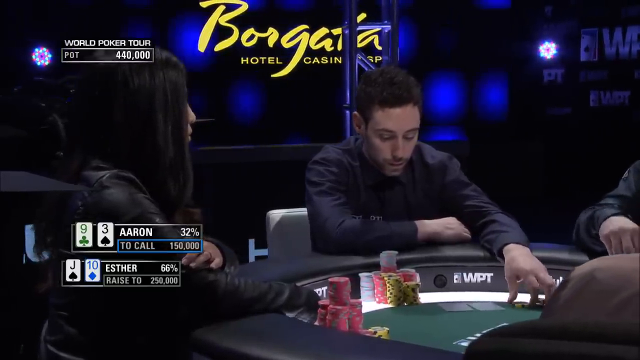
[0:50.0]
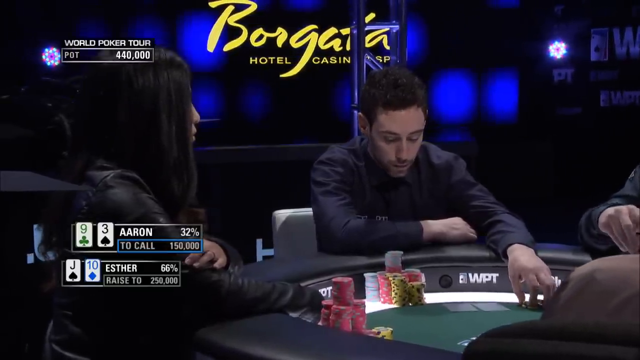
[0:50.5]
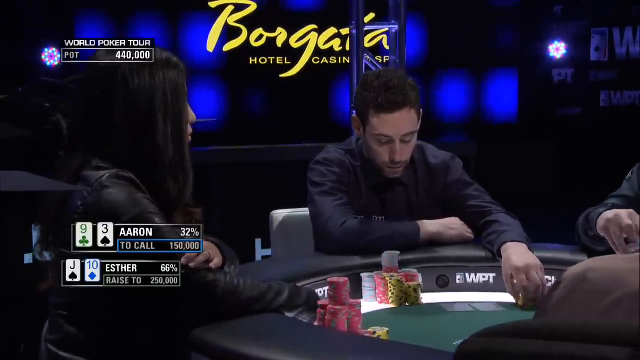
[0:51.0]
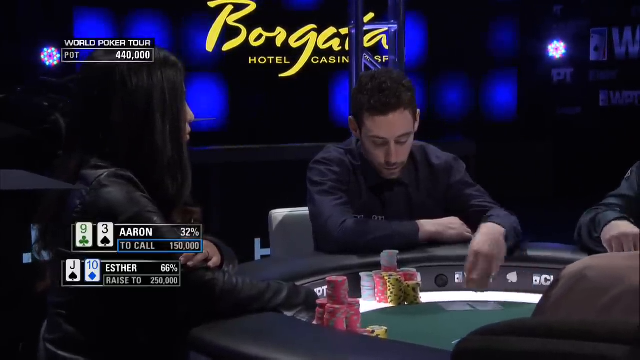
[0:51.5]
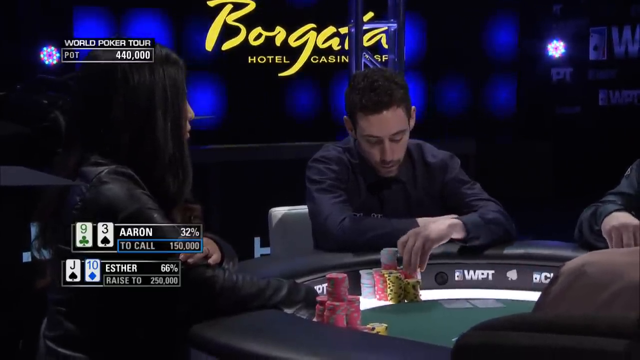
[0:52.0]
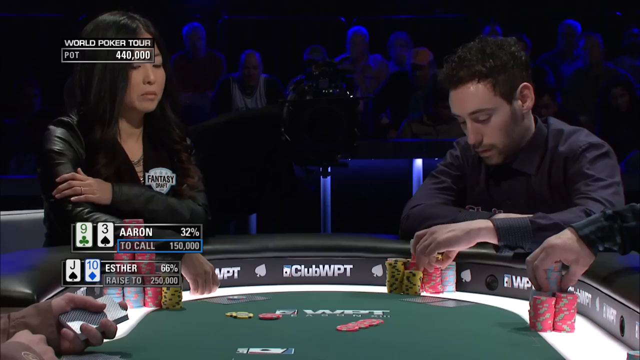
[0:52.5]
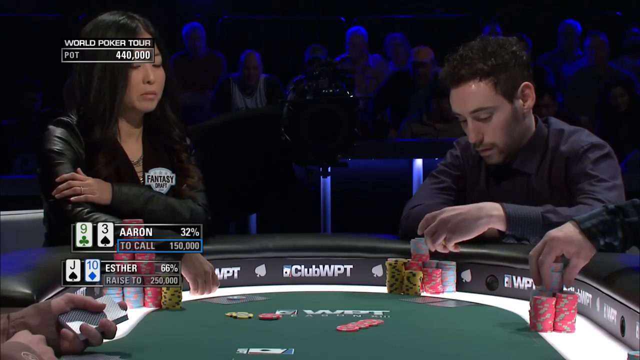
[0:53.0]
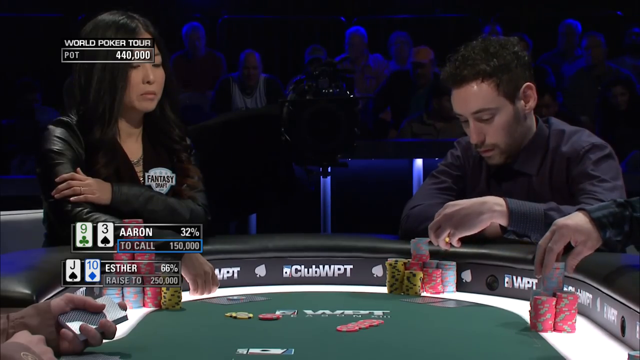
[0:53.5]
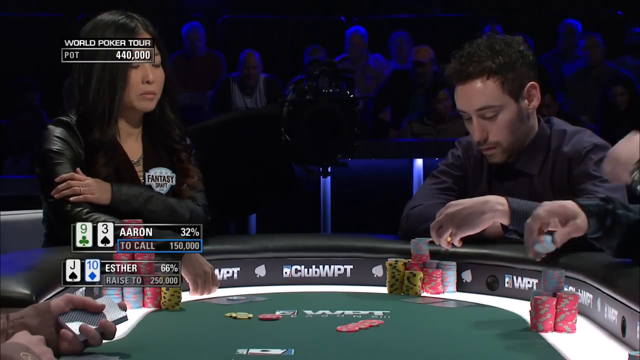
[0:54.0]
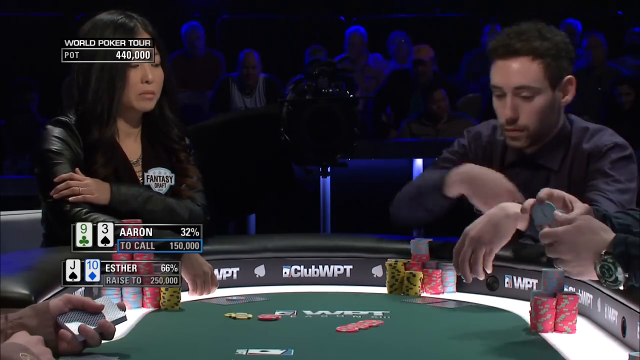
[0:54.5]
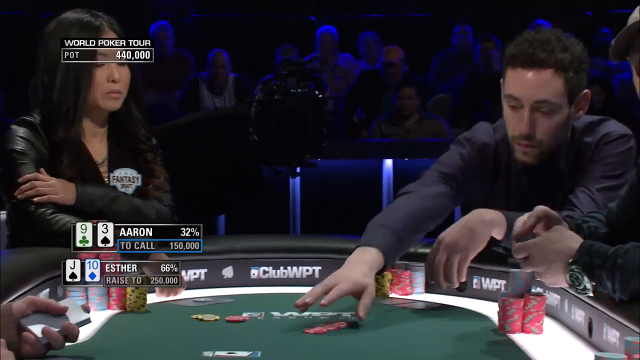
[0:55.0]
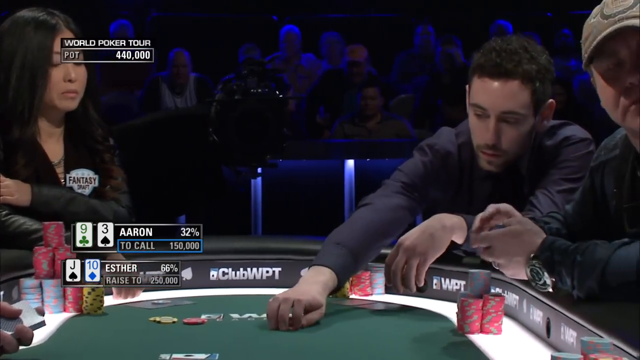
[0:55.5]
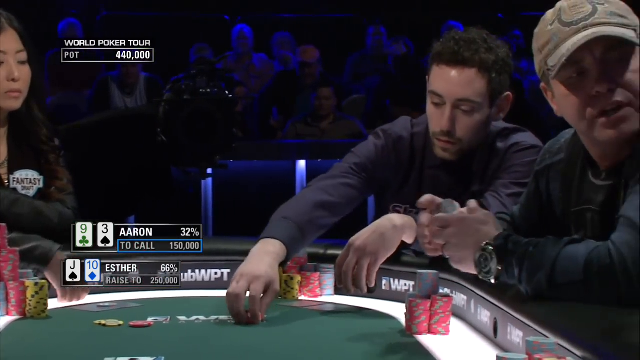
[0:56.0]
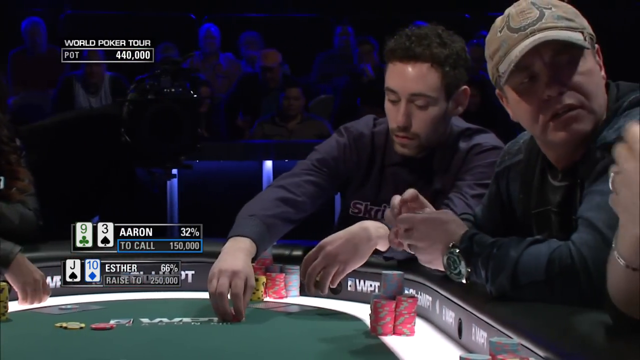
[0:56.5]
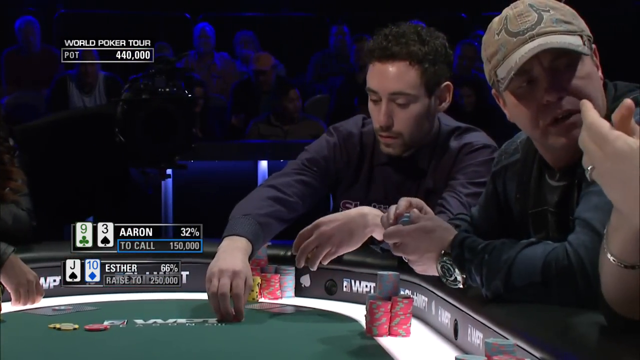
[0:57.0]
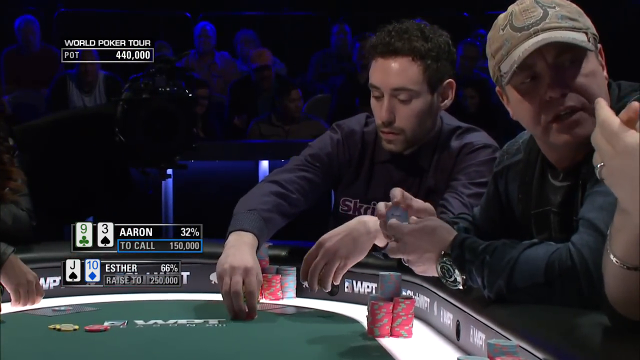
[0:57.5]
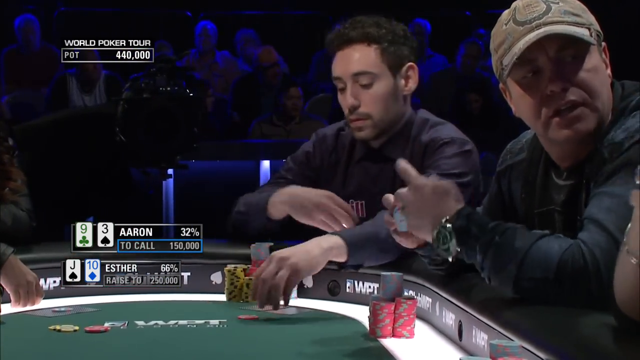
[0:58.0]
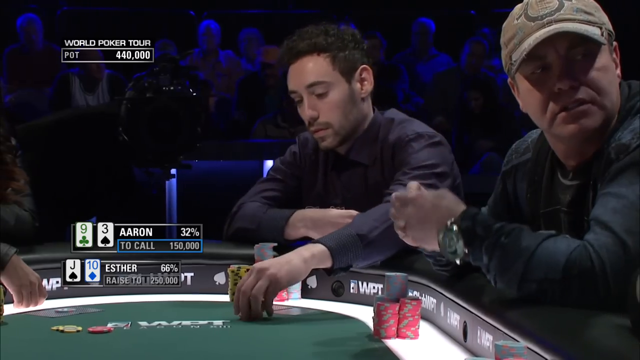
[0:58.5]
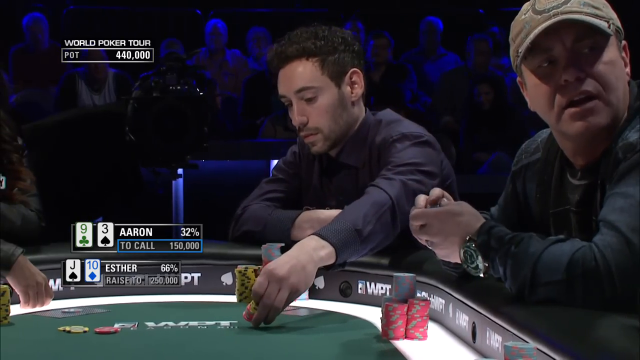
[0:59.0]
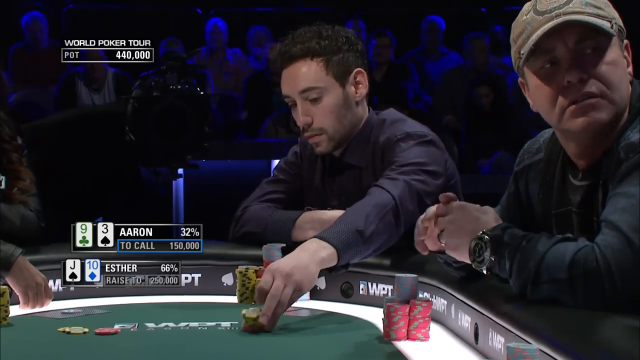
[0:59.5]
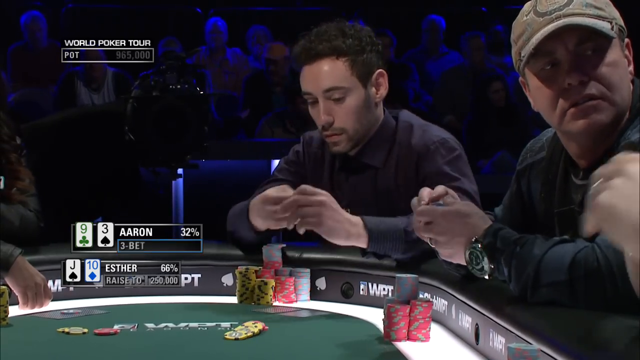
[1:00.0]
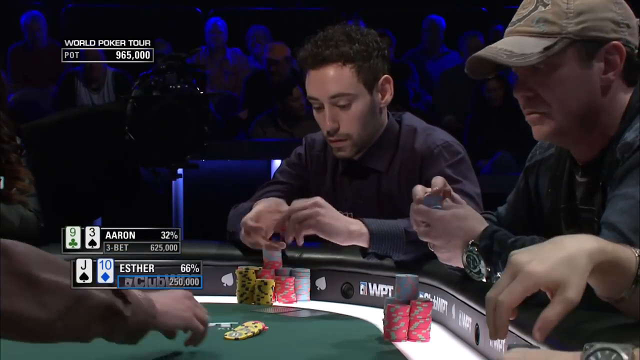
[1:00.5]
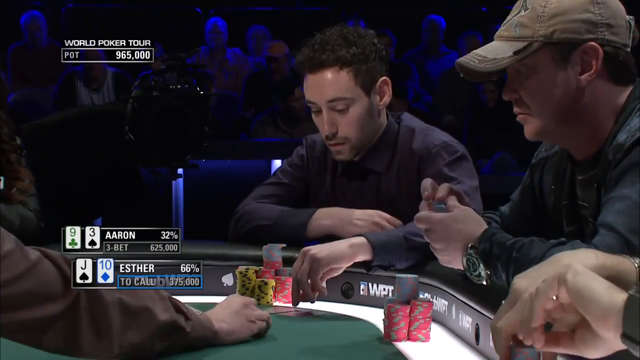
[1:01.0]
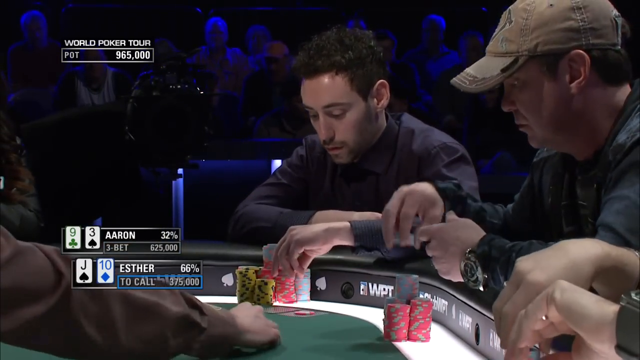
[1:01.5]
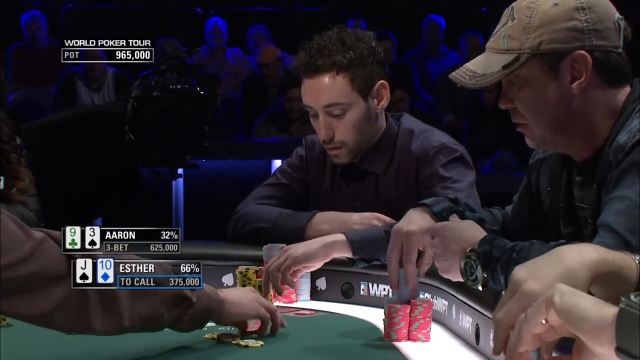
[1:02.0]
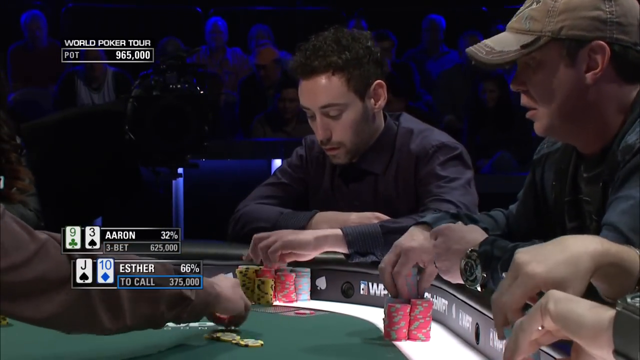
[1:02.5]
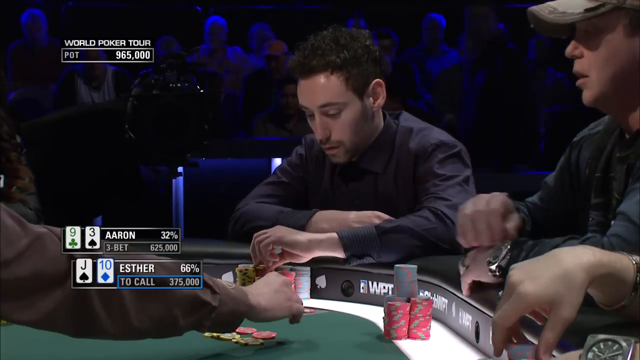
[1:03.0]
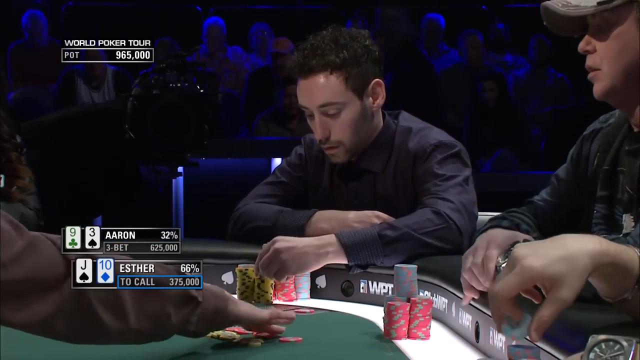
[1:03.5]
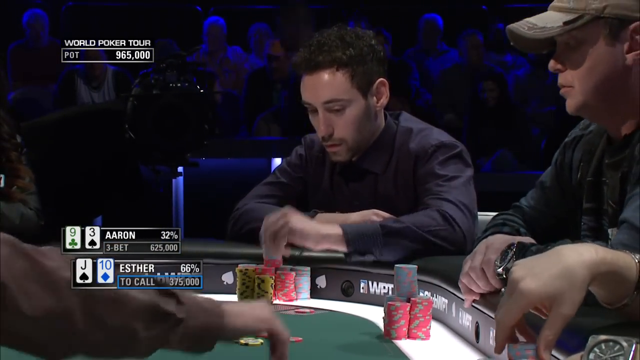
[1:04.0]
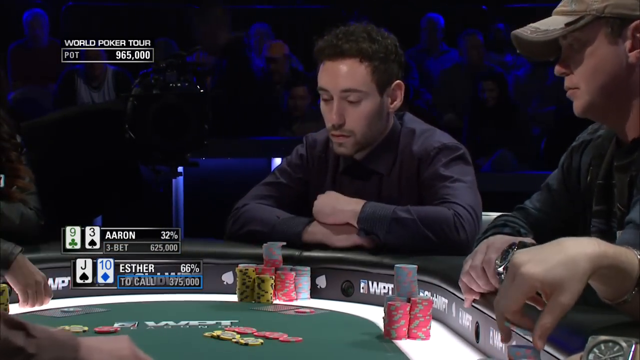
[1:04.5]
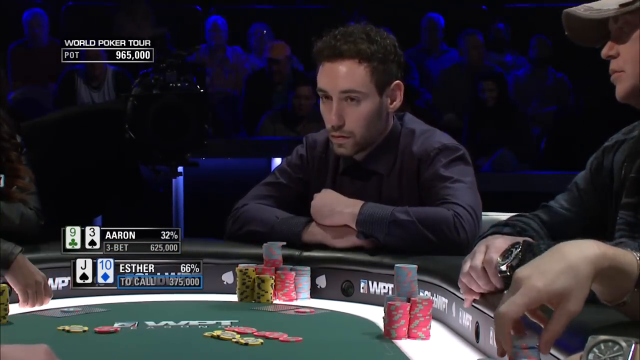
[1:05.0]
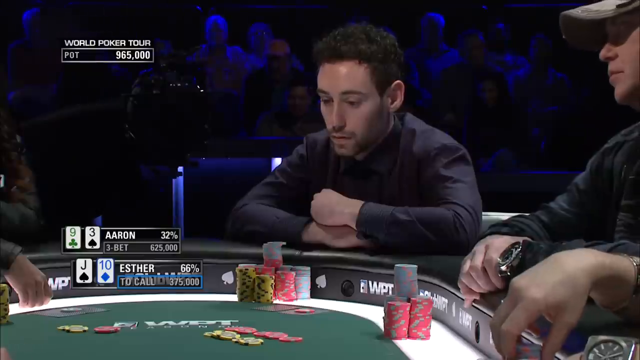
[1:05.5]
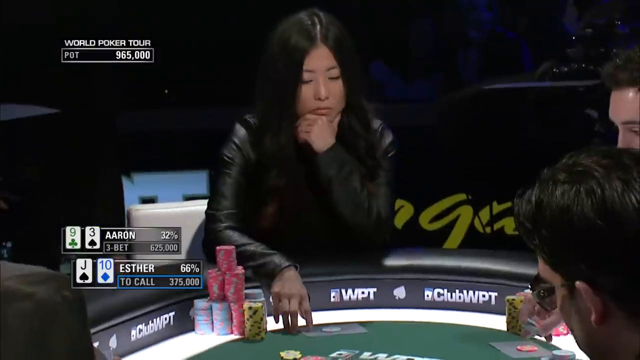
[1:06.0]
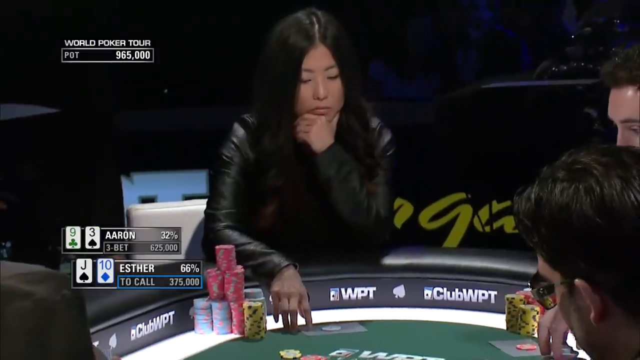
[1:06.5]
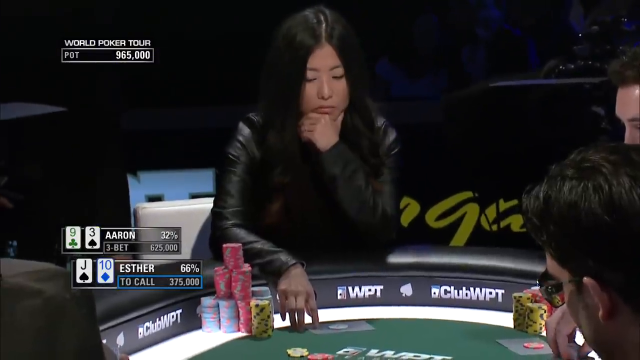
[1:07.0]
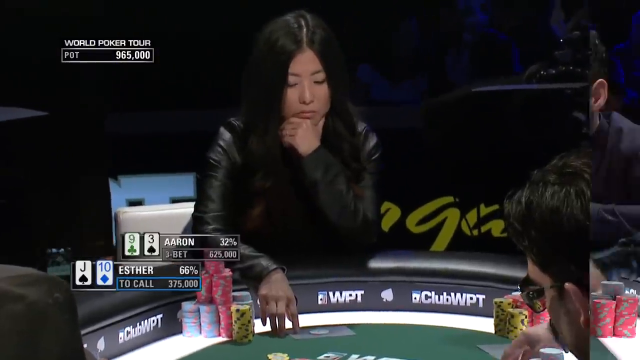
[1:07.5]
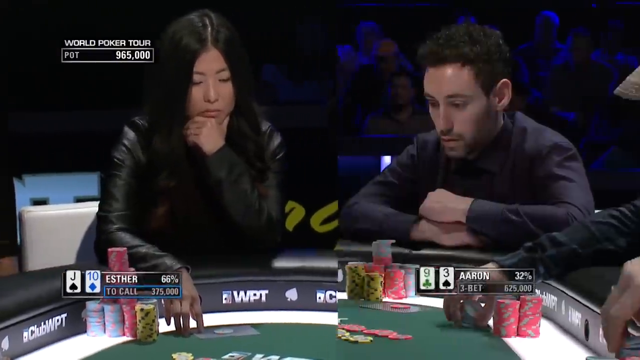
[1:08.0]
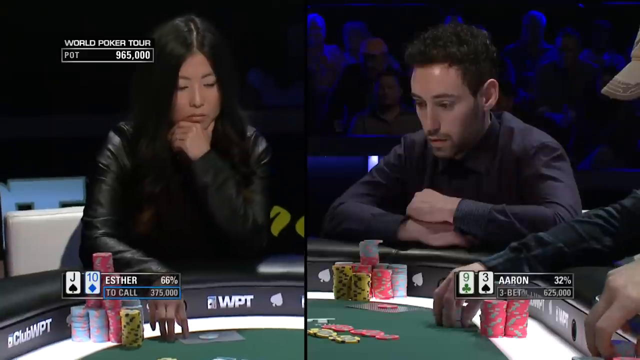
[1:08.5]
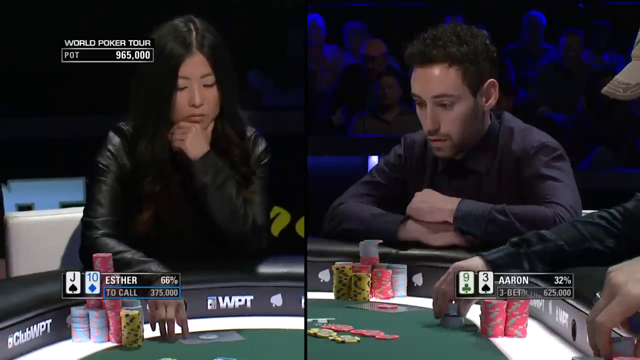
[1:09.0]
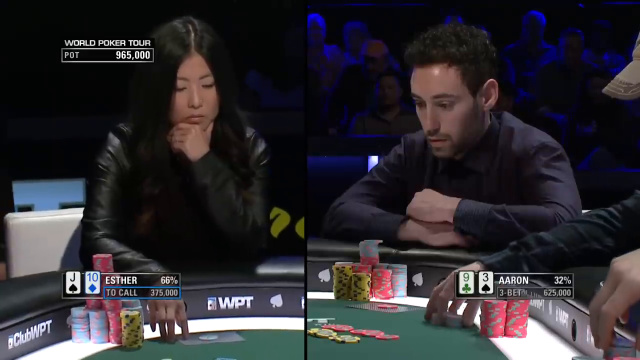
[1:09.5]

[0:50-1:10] The same man looks downward at the poker table, still with a stack of red, yellow and whitish poker chips. His left hand is extended, playing around with and holding a yellow poker chip, while his right hand appears to be resting on the rim of the table. He stacks the yellow chips on top of the red chips on the table. Someone grabs his chips and spreads them out, counting them, and the man looks at the dealer. The scene jumps to the Asian woman, who grabs her chin with her left hand as if pondering, while her right hand appears to tap on the table. A split screen divided by a black line then shows Esther and Aaron, with percentages of their chances of winning.